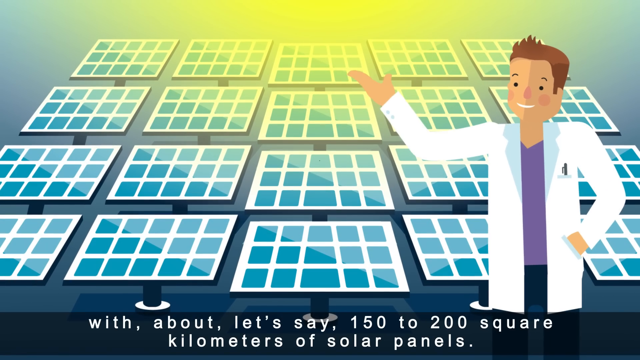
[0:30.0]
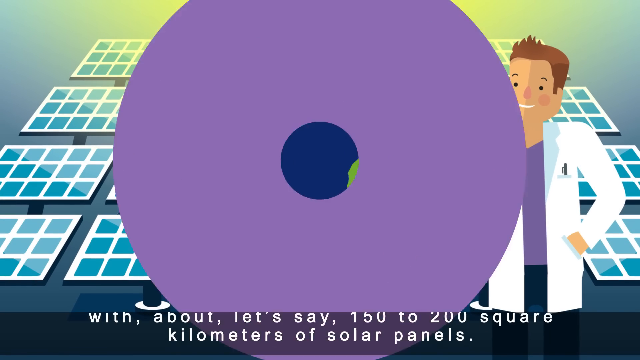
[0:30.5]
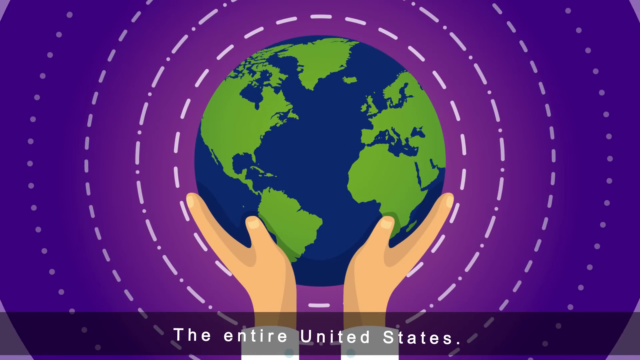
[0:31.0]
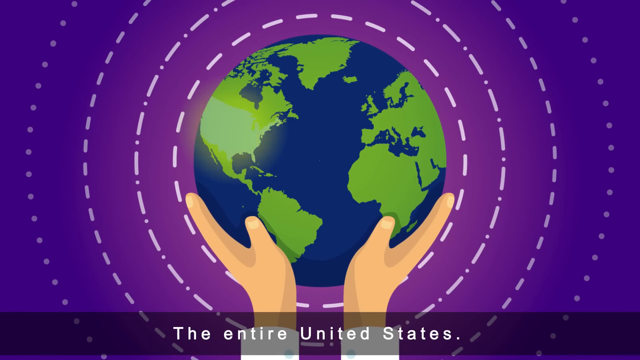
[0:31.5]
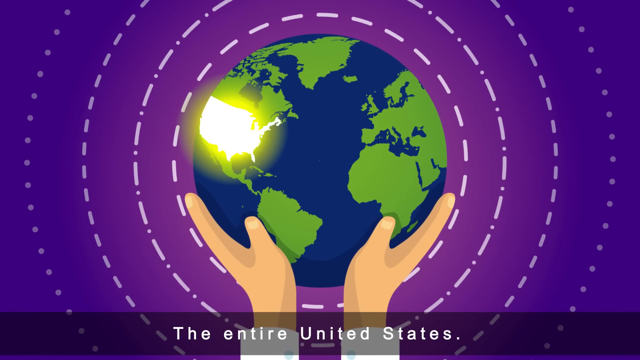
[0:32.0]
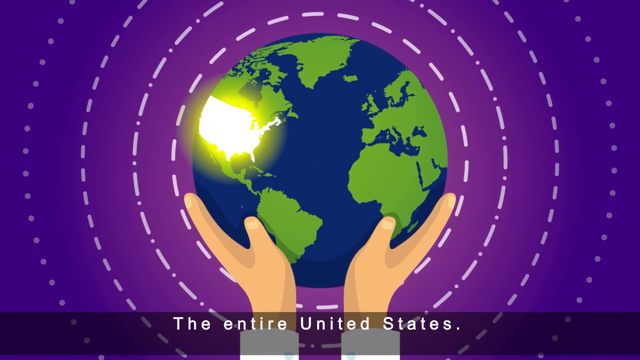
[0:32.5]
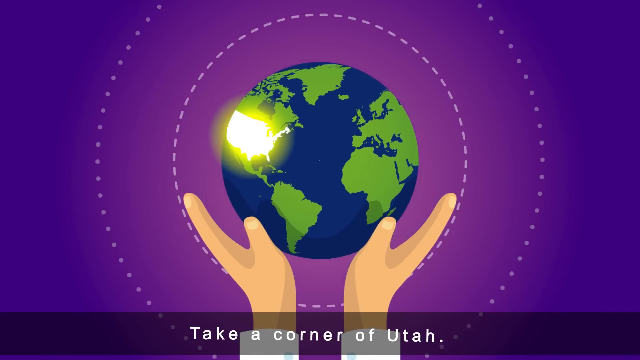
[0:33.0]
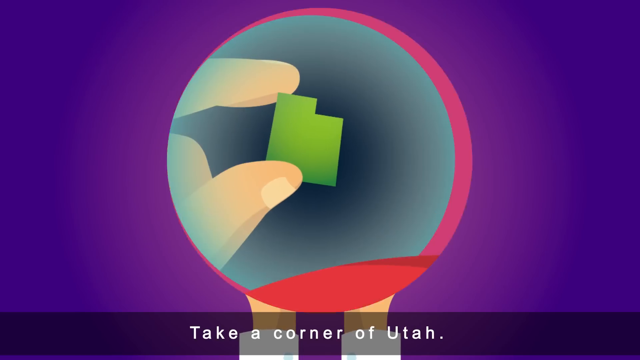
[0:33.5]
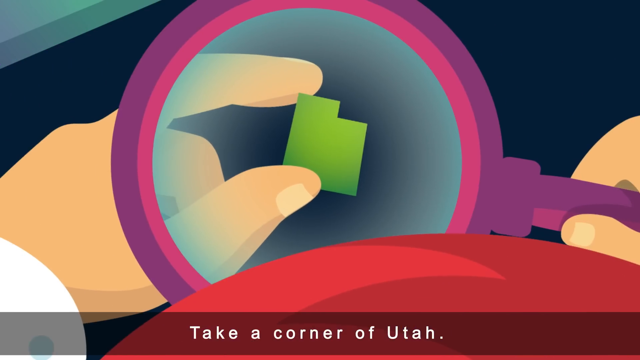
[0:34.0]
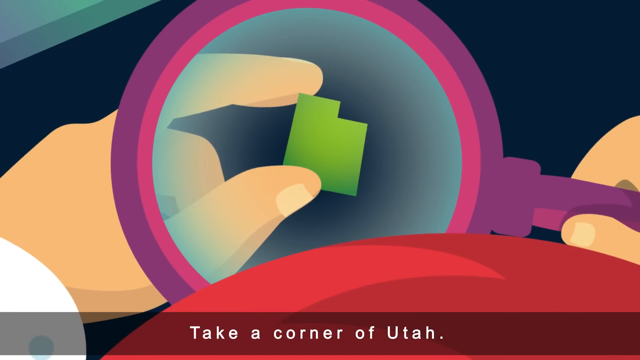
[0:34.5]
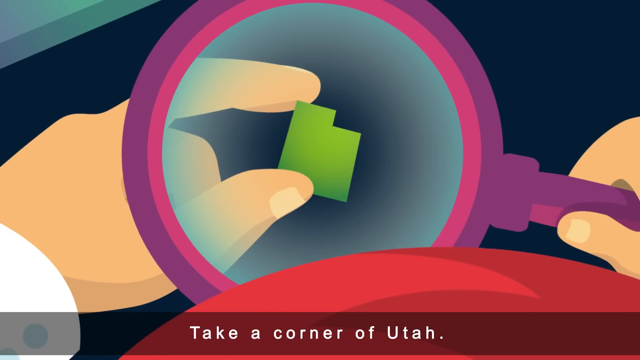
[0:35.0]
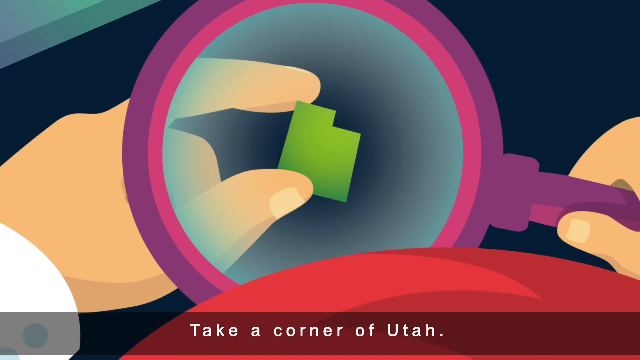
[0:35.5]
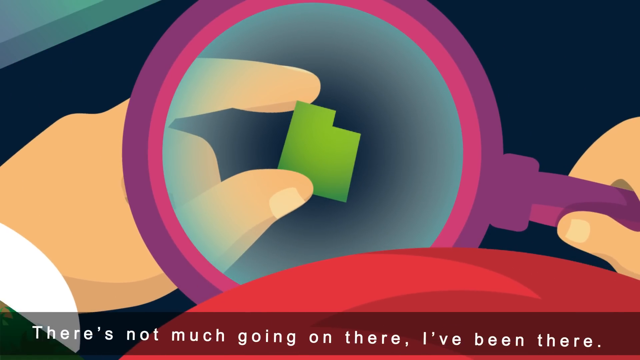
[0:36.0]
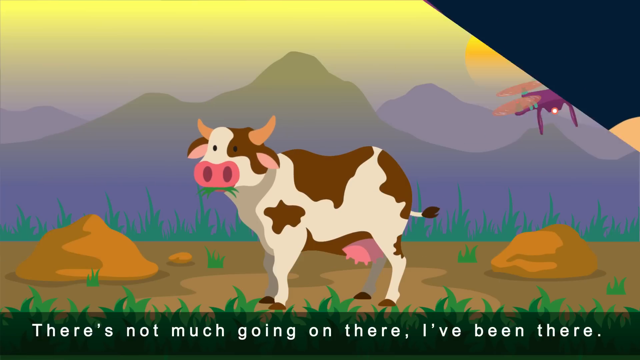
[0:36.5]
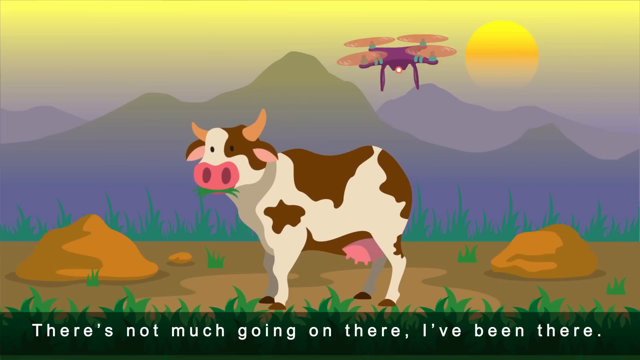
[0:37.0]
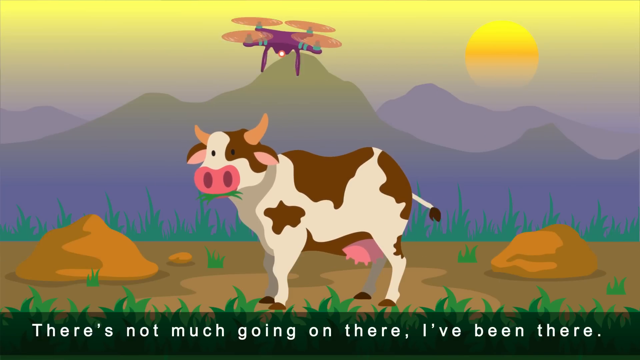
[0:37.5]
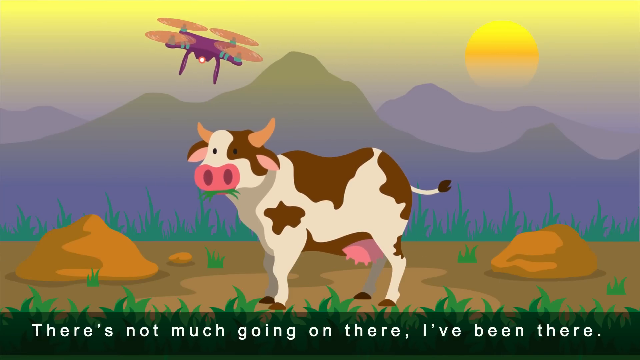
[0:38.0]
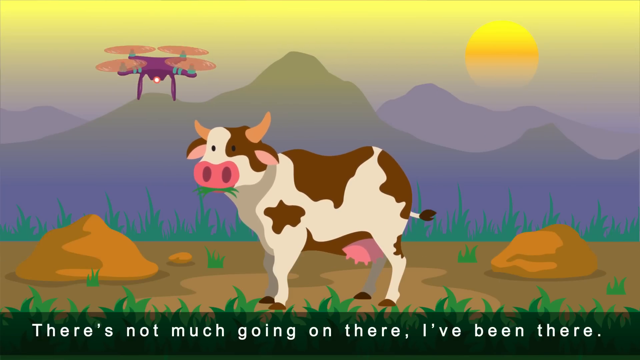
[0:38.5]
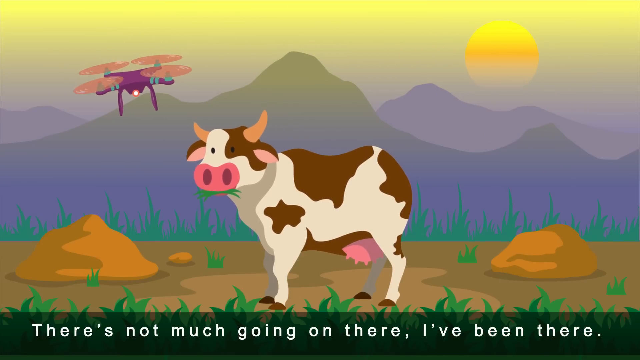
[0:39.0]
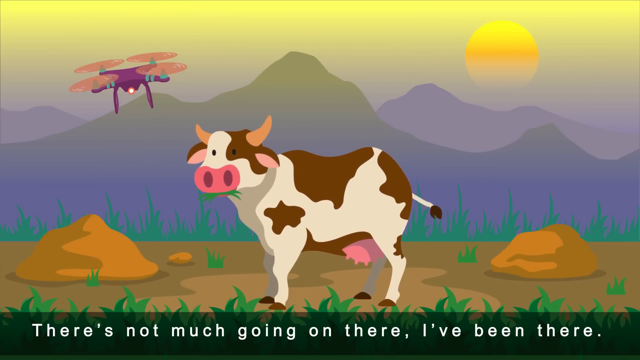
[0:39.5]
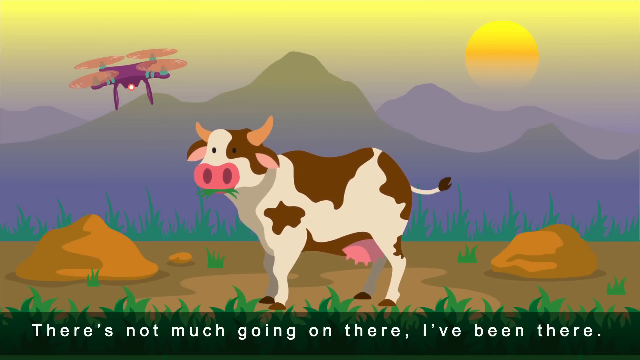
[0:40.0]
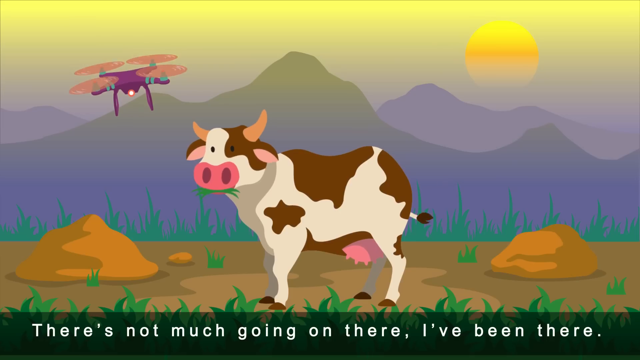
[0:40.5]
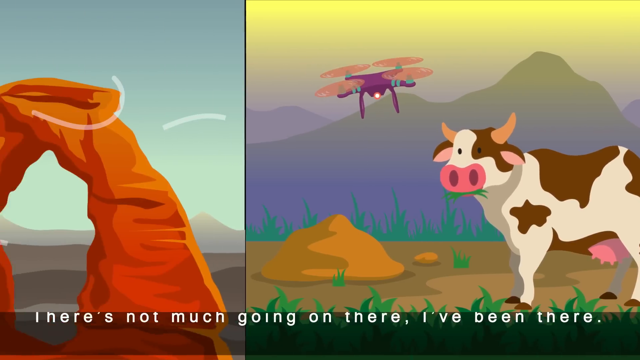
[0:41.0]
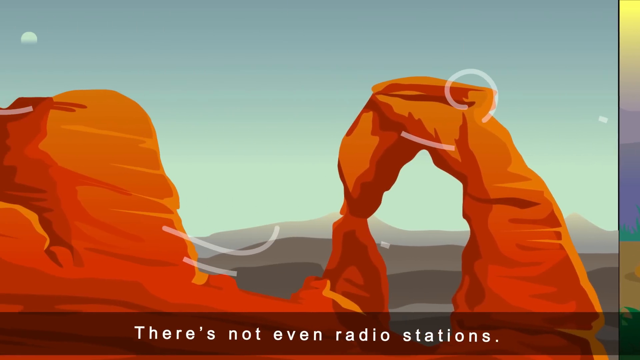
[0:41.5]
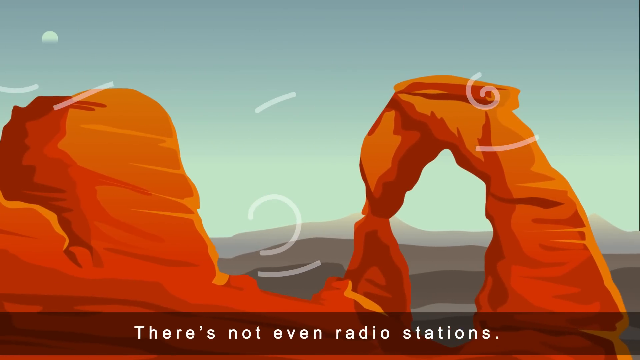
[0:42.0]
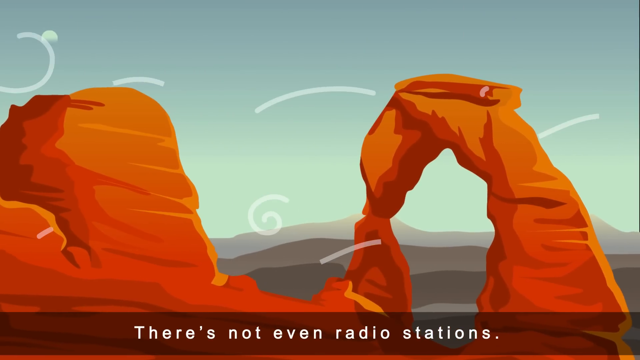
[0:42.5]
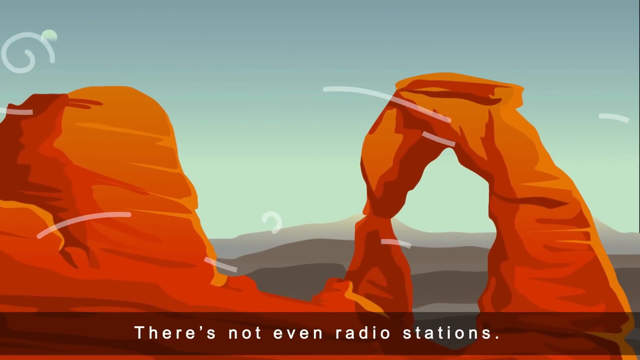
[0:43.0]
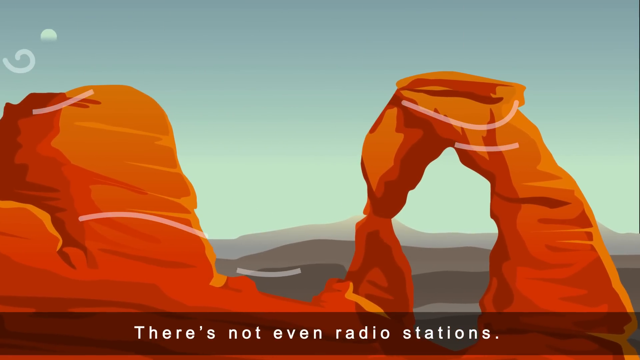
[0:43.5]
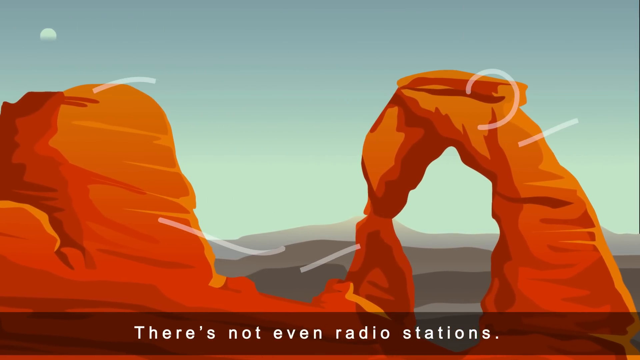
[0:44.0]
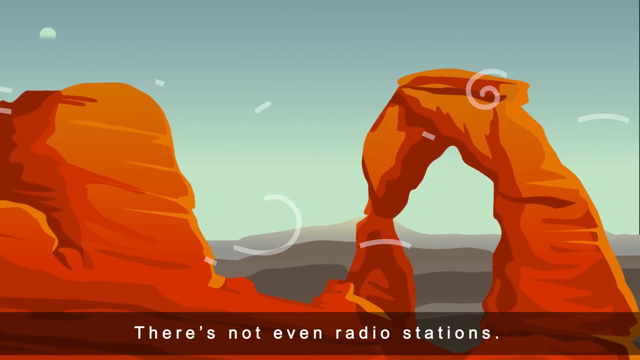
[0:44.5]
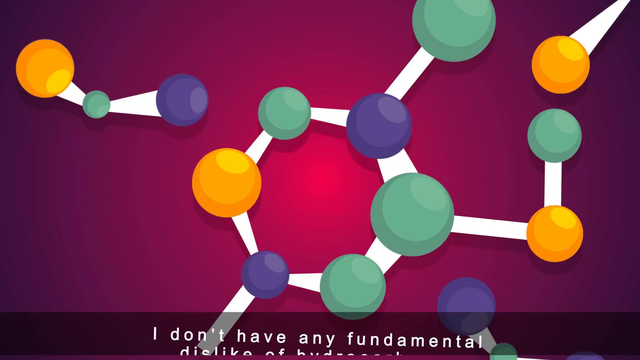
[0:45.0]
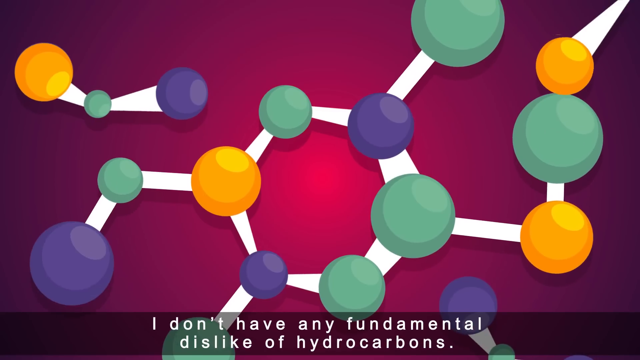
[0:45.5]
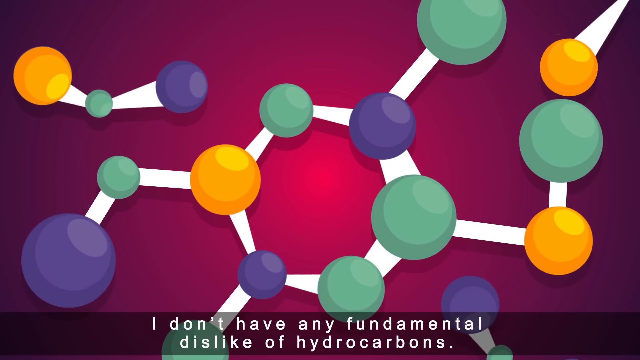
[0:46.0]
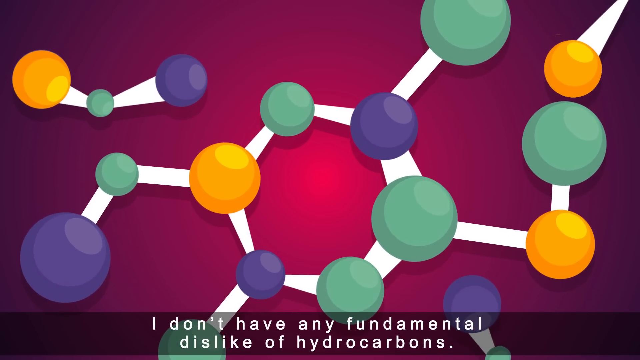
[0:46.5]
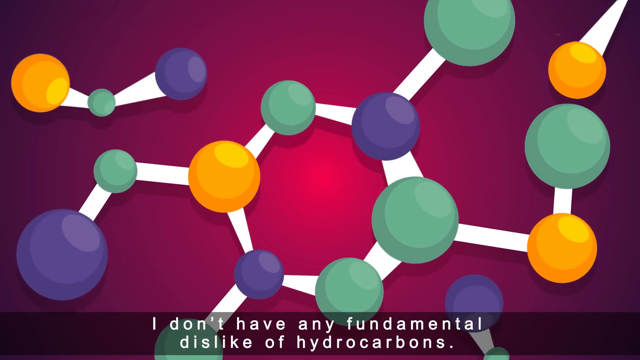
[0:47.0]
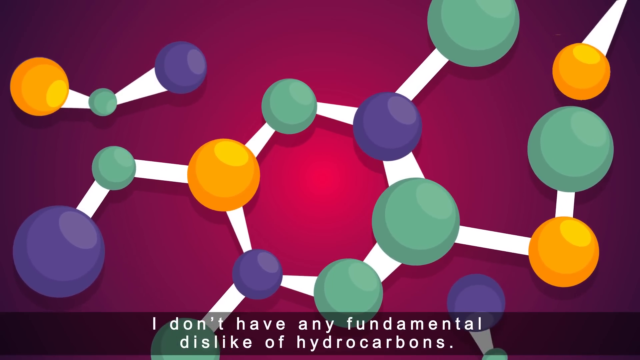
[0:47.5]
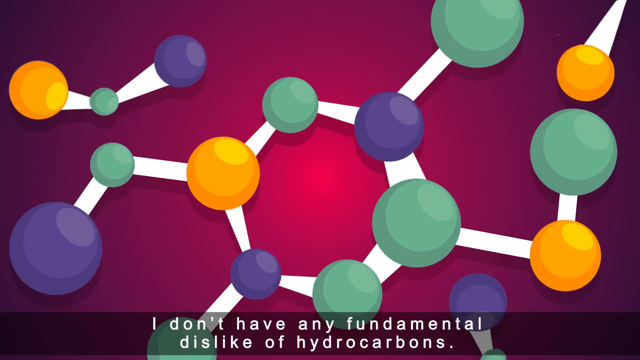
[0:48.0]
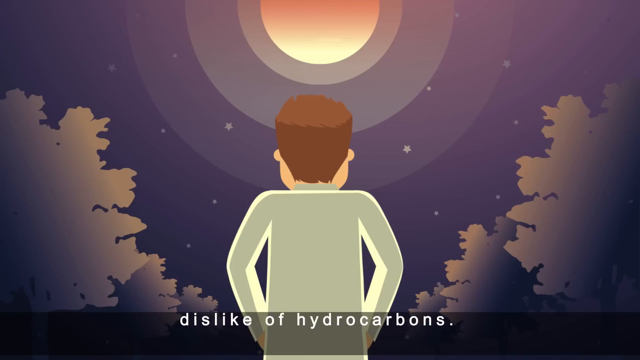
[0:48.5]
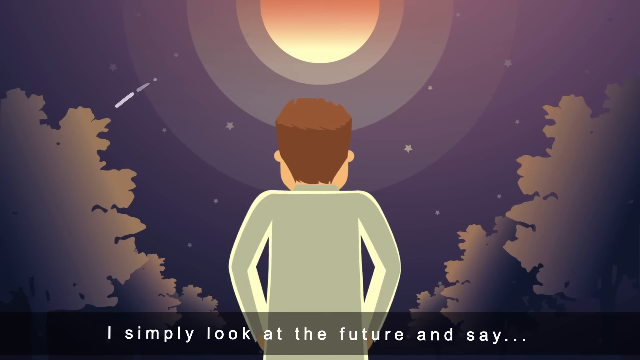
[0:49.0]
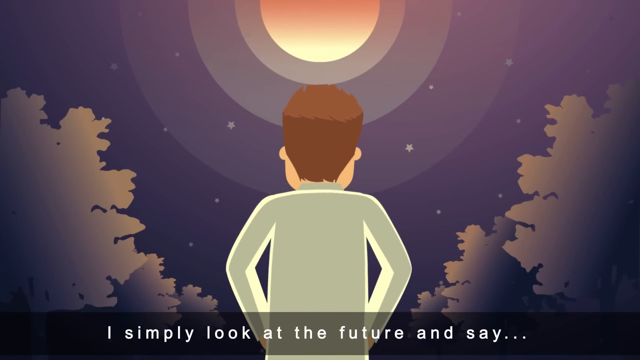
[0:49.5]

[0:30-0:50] An animated image of squares is shown, with text written across the bottom of the screen. The squares look like they could be solar panels. There are 20 squares on the screen, and each square is separated into fifteen squares. On the left side of the frame, the animated character representing Elon Musk is standing and smiling, with rosy cheeks. His right arm is outstretched away from his body, bent at the elbow, with his palm facing up and his thumb spread away from his hand. His left arm is bent at the elbow with his hand in the pocket of his lab coat. The lab coat is white with a blue collar, and he wears a purple V-neck shirt, navy-blue pants, and white shoes. Next, an image of a globe appears, with a pair of hands holding the globe on either side toward the bottom portion of the frame. The palms of the hands are touching the globe, with the fingers outstretched and the thumbs sort of positioned upward to further steady or balance the globe. Around this, white dotted lines form circles, and the background is a purple gradient. One portion of the globe lights up. Next comes an animated image of a cow, followed by an animated image that looks like a desert scene with the air blowing around. Then an animated image that looks like Elon Musk appears, with his back to the viewer, looking up at the moon in the night sky.